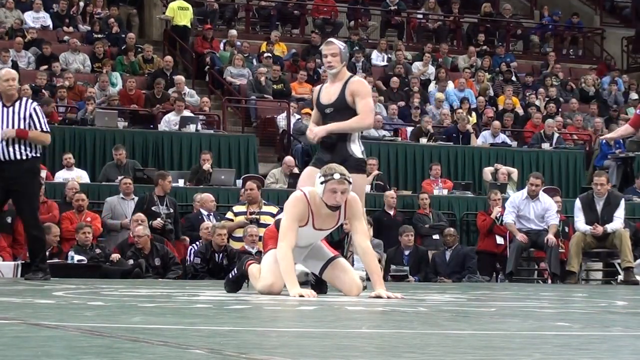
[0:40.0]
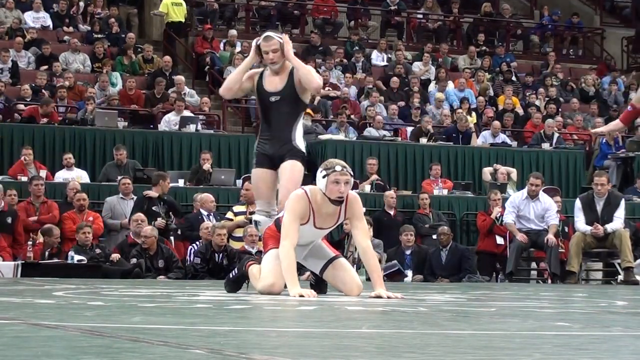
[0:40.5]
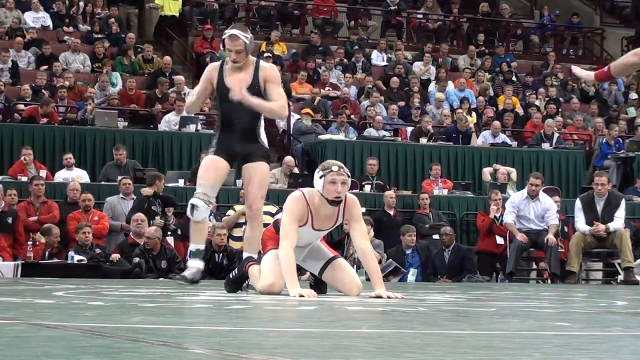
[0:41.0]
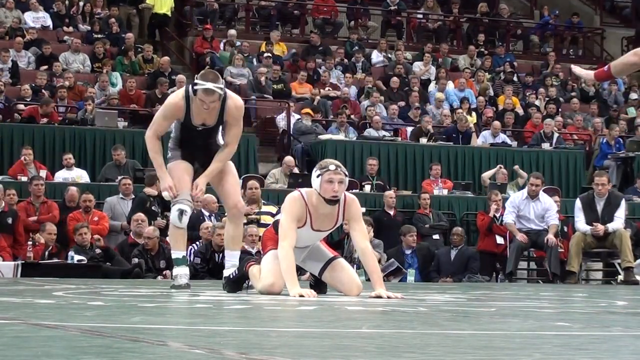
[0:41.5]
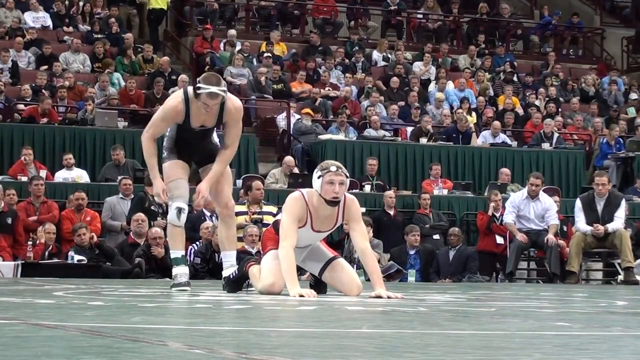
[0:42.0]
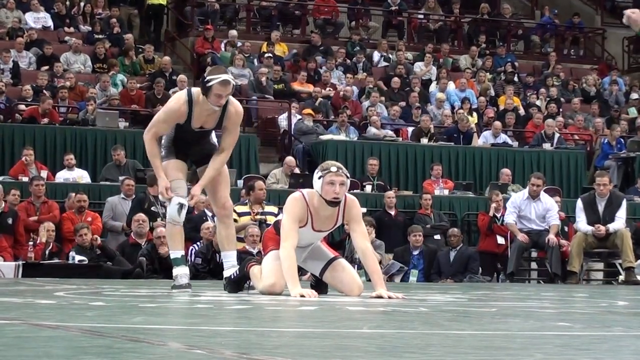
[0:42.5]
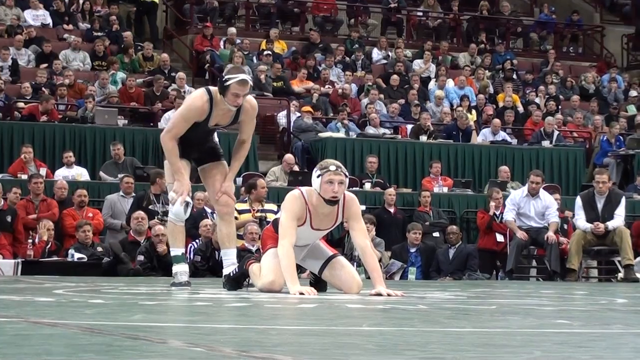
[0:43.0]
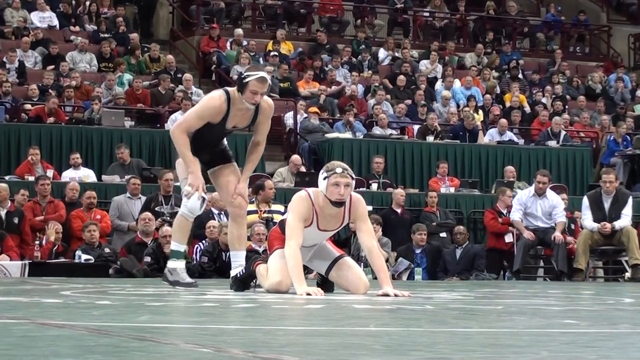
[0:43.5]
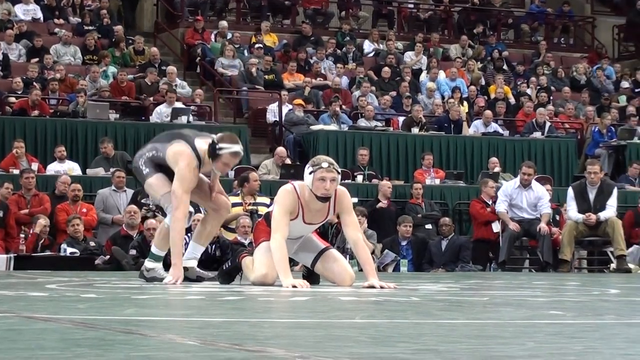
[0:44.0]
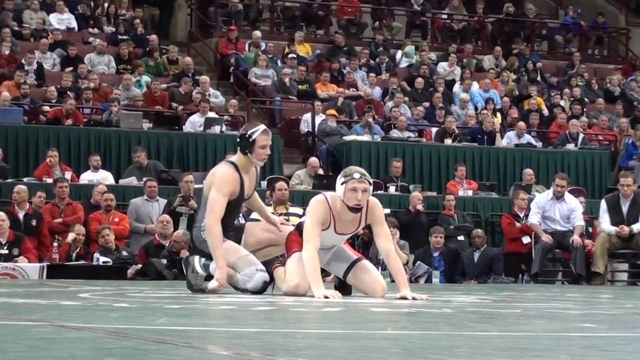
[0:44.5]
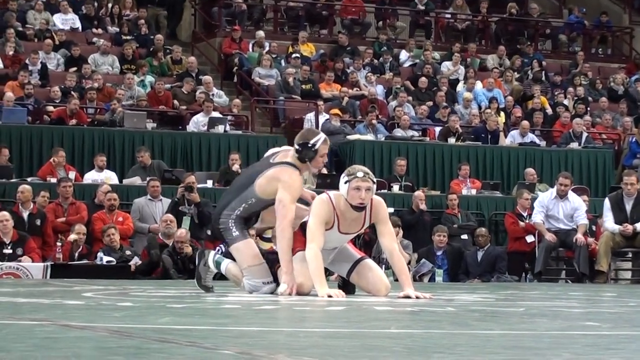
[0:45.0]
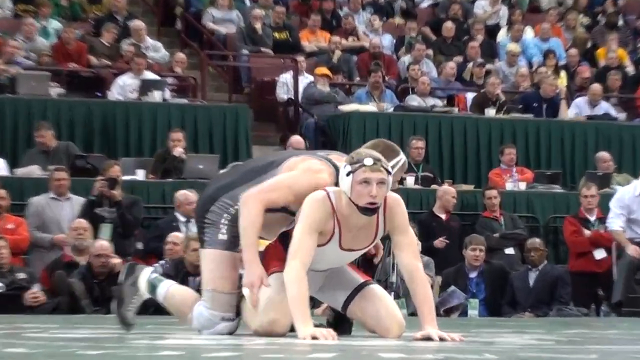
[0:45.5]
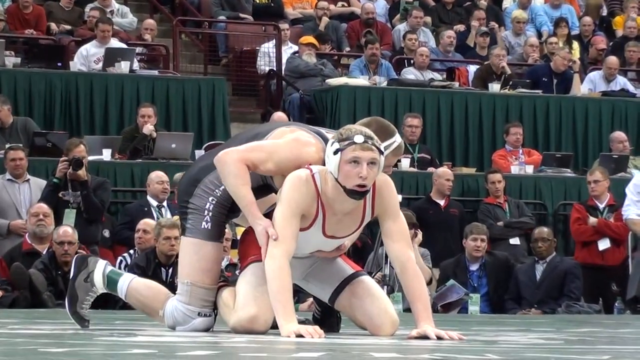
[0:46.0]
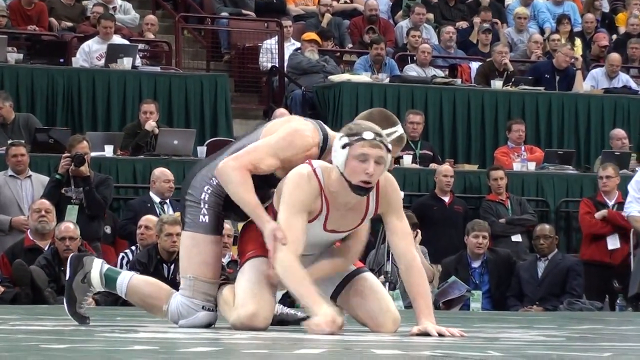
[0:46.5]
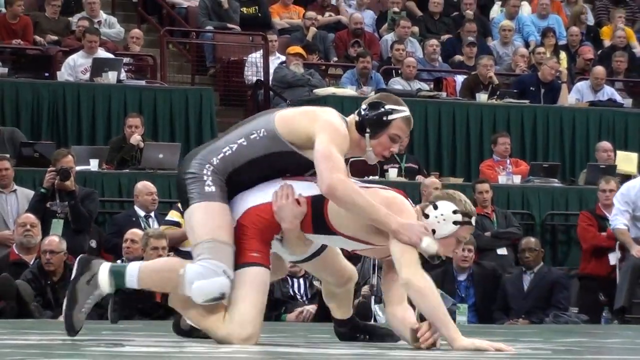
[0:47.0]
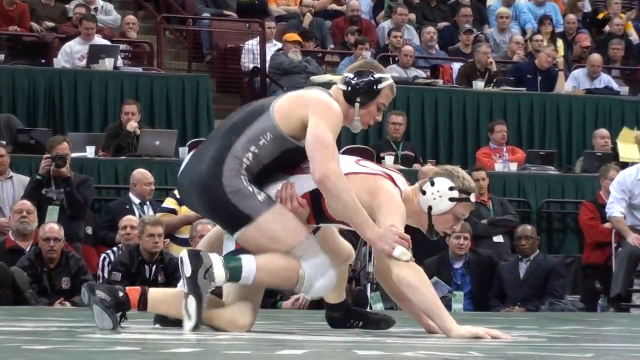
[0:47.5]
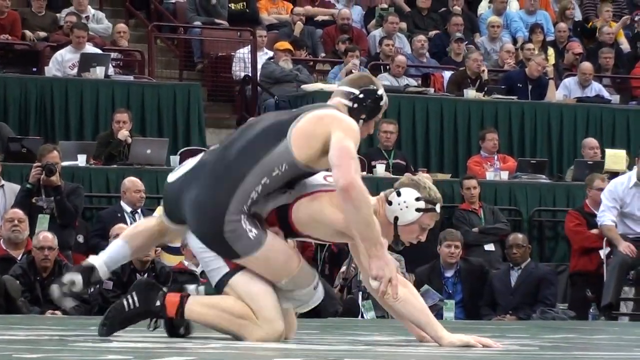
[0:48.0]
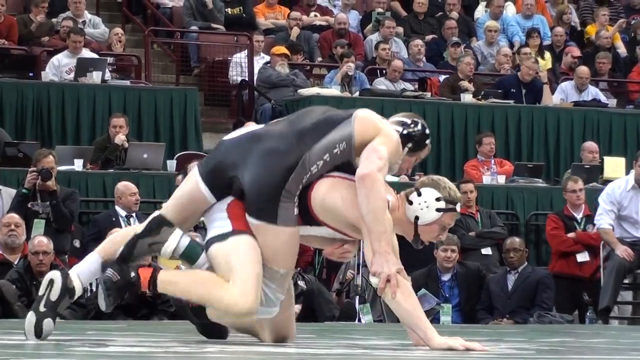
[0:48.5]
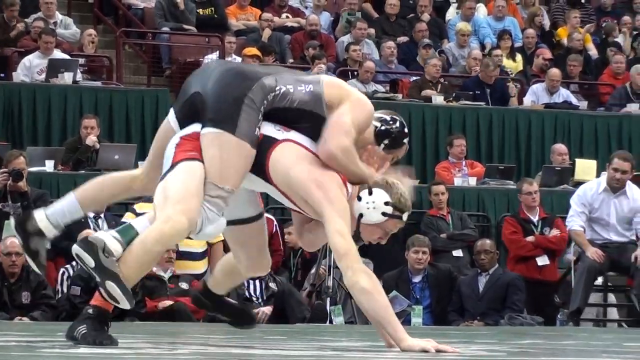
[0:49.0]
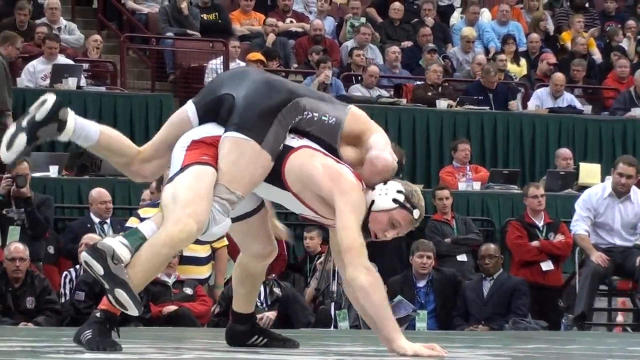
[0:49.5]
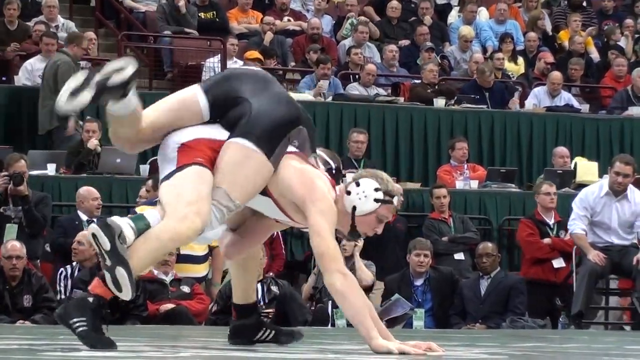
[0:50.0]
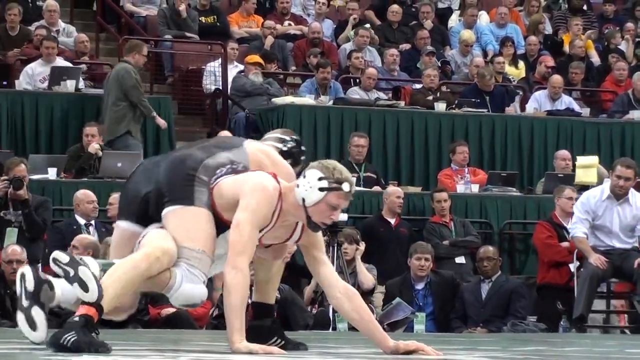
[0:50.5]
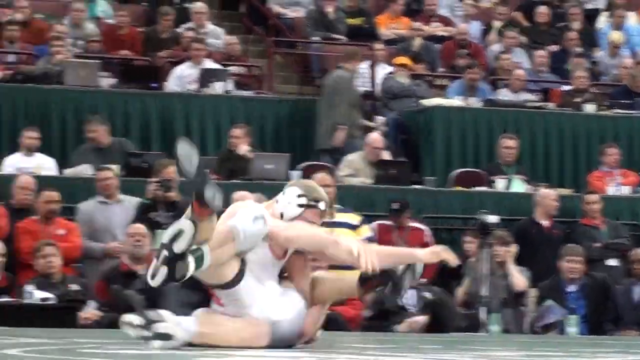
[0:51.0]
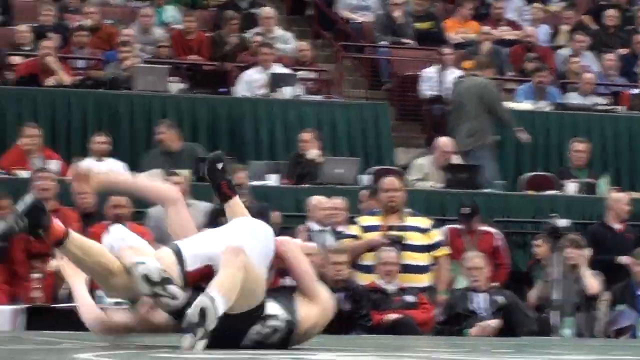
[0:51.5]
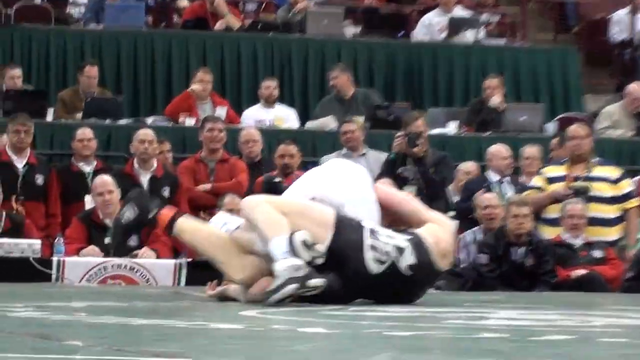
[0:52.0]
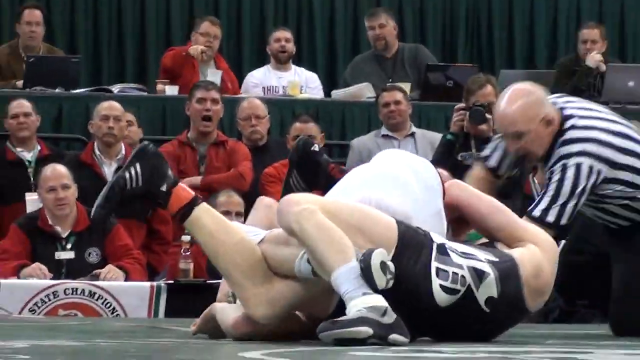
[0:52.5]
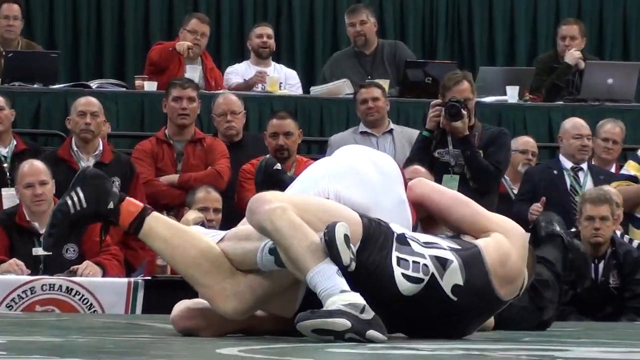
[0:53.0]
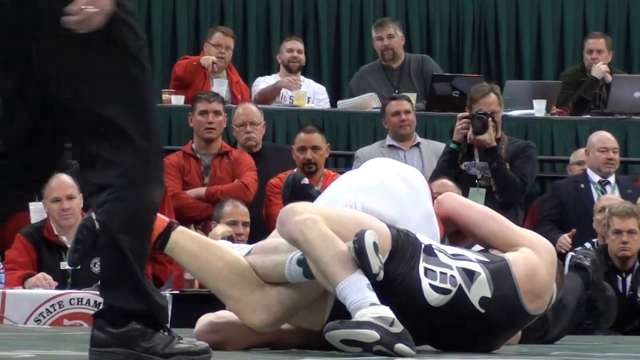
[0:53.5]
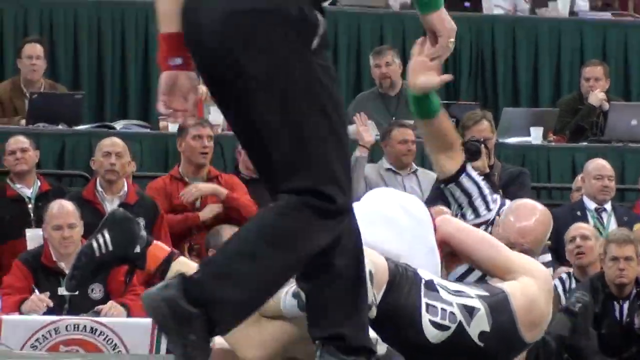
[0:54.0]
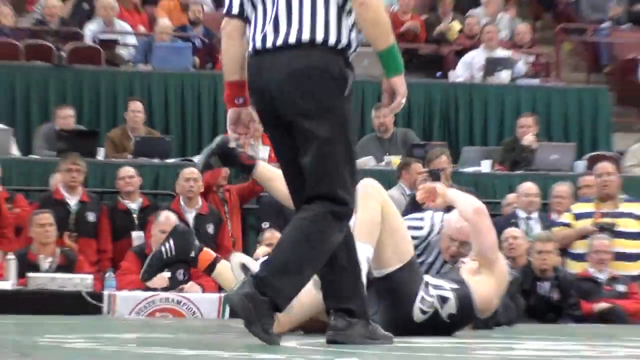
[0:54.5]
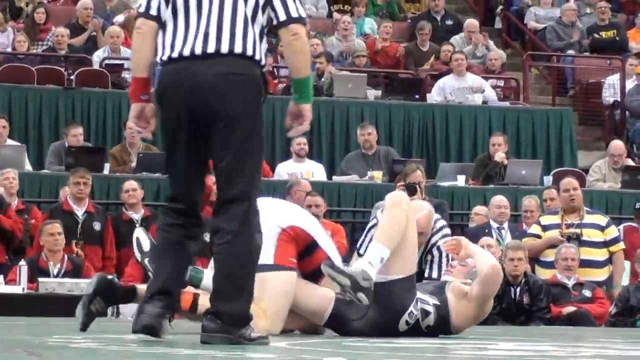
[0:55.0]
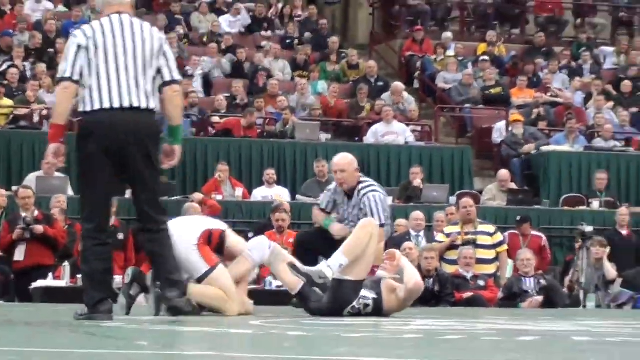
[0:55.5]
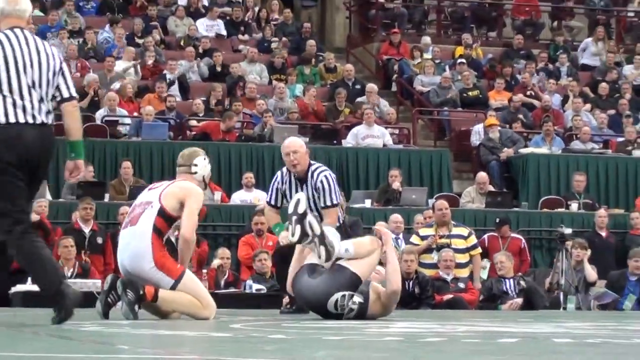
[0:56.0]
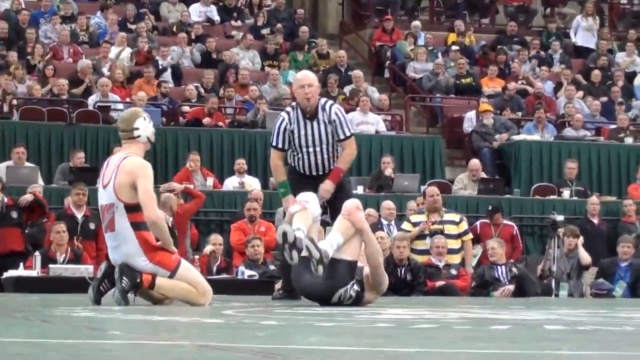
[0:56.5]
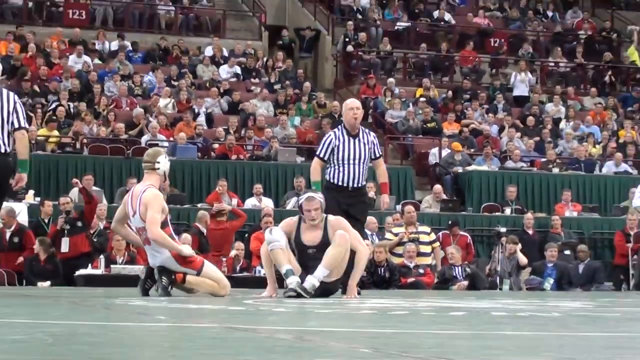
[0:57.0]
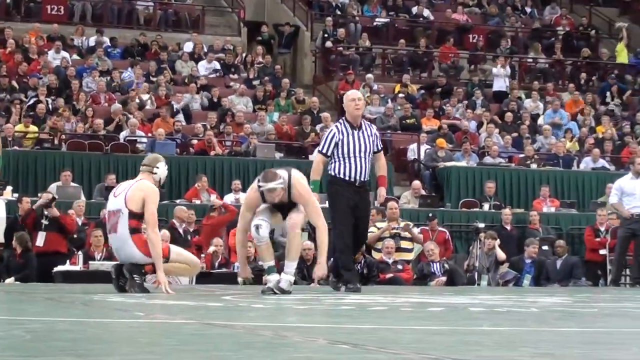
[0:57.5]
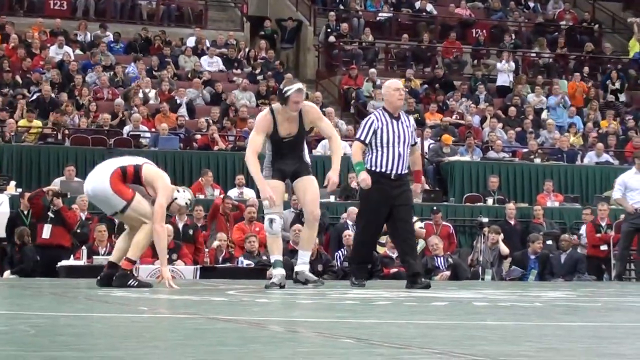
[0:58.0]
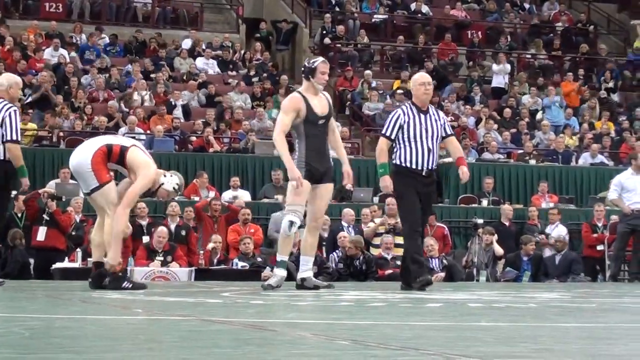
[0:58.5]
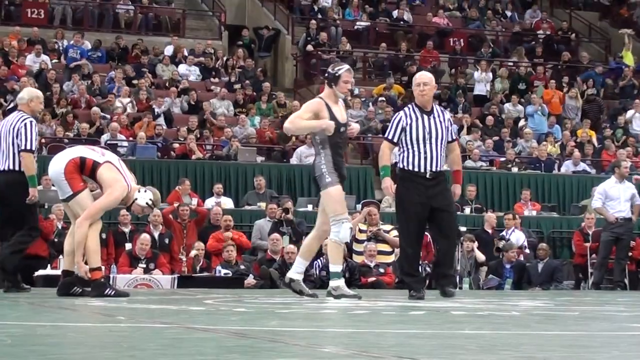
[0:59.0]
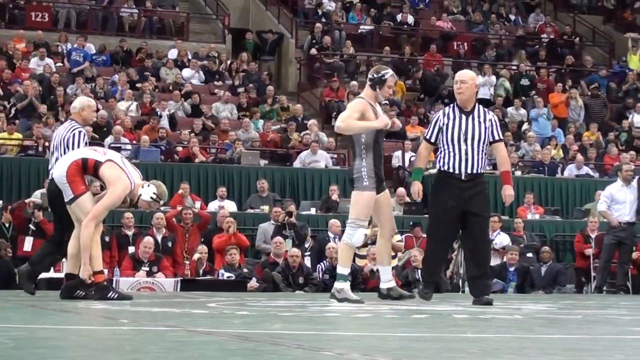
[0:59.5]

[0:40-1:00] The two wrestlers reset to standing and circle each other cautiously. Suddenly the wrestler in black drops levels and grabs his opponent around the thighs in what is kind of a textbook takedown. The crowd reacts instantly, rising slightly in their seats. The wrestler in white resists, his arms flailing out as he tries to find his balance, but he is brought down flat on the mat. The wrestler in black keeps one arm locked under his opponent's chest and the other controlling his legs. The referee moves in fast, eyes locked on the wrestlers' movement, then his palm hits the mat and the crowd cheers. The wrestler in black does not celebrate; he stays focused, still holding his position until the referee signals a break.